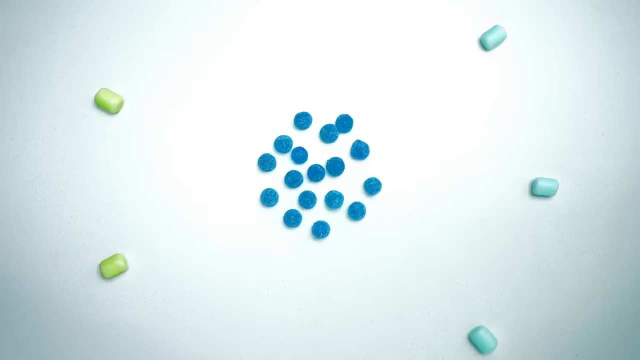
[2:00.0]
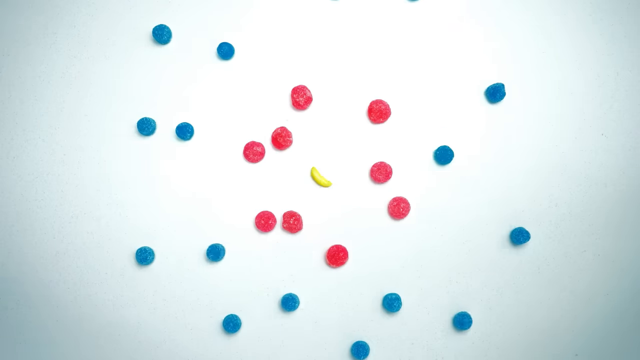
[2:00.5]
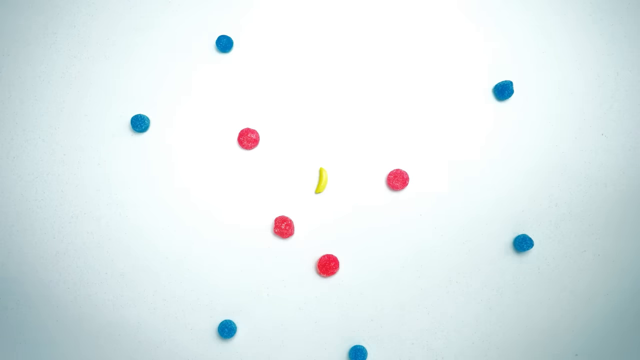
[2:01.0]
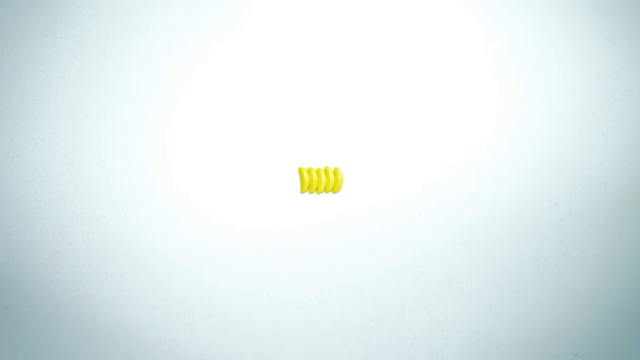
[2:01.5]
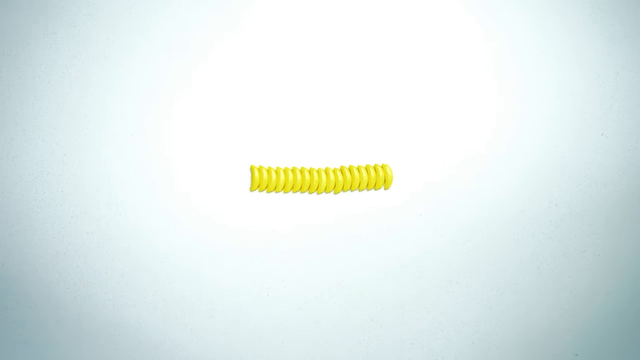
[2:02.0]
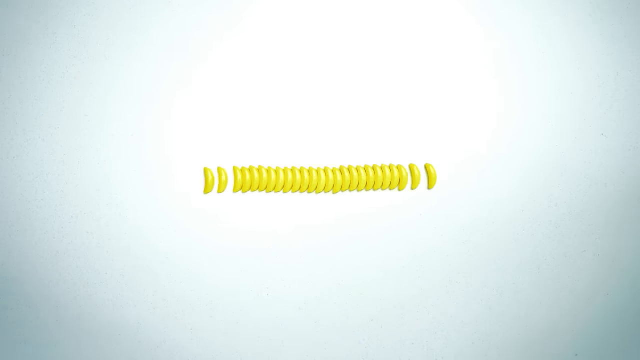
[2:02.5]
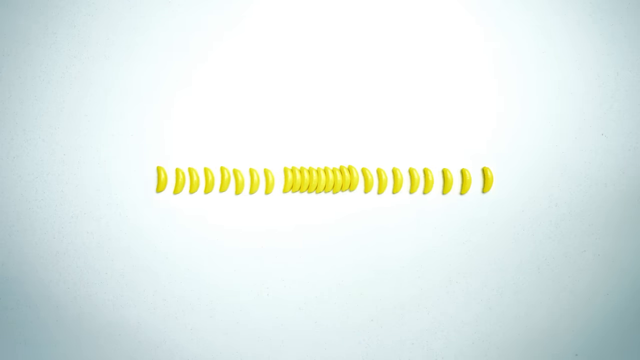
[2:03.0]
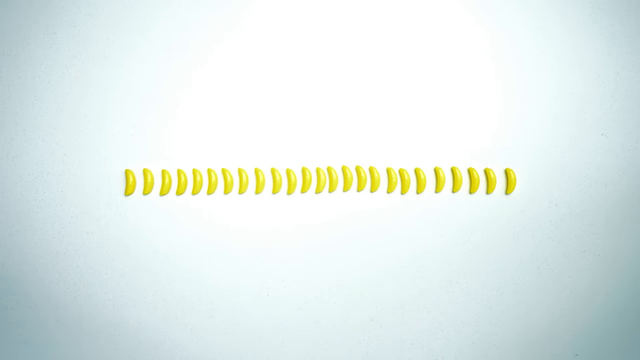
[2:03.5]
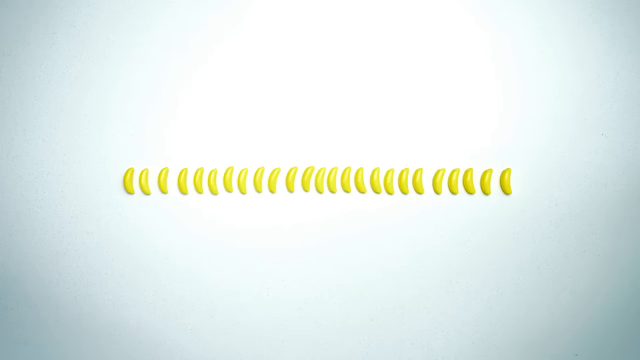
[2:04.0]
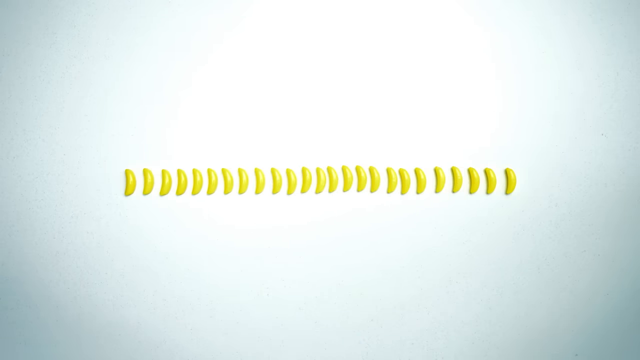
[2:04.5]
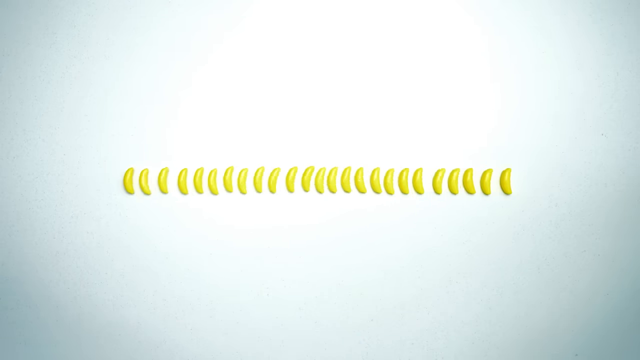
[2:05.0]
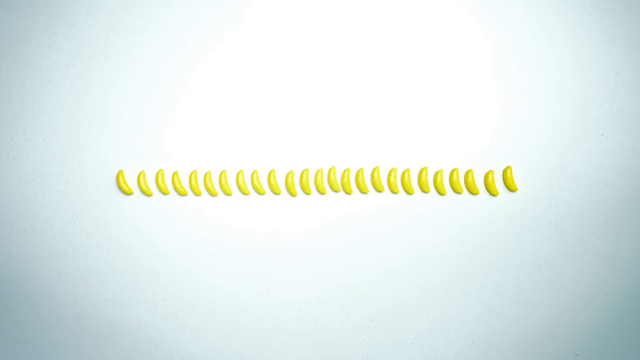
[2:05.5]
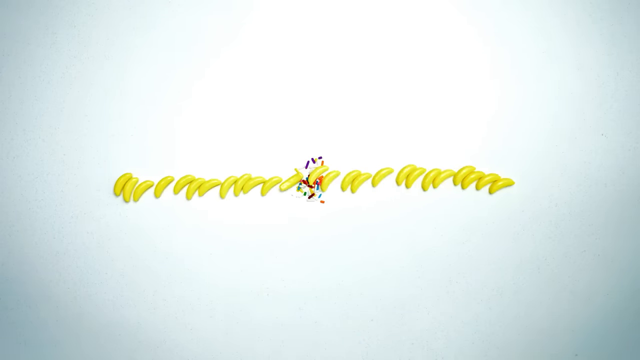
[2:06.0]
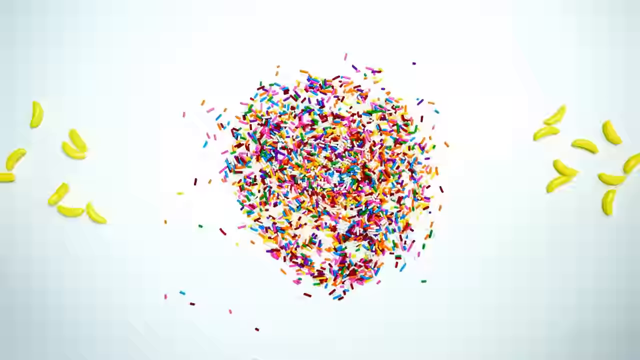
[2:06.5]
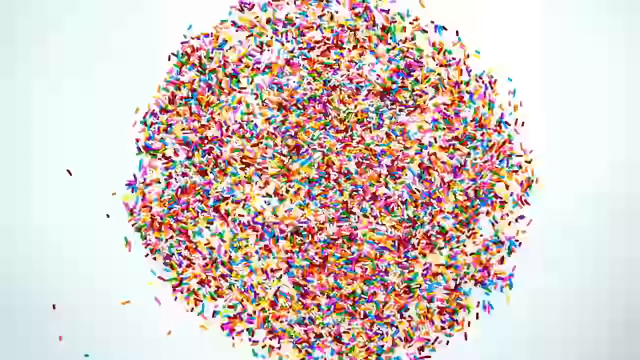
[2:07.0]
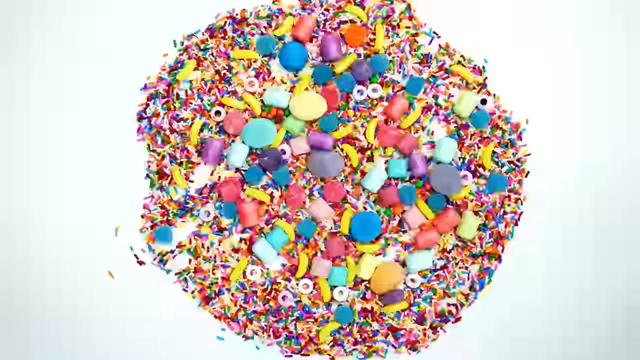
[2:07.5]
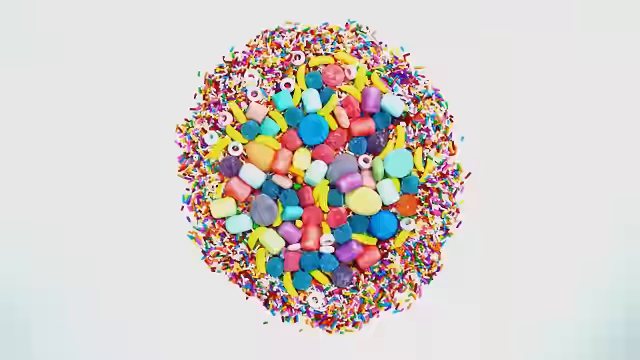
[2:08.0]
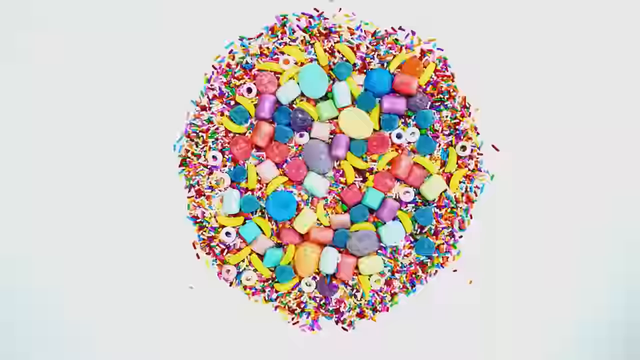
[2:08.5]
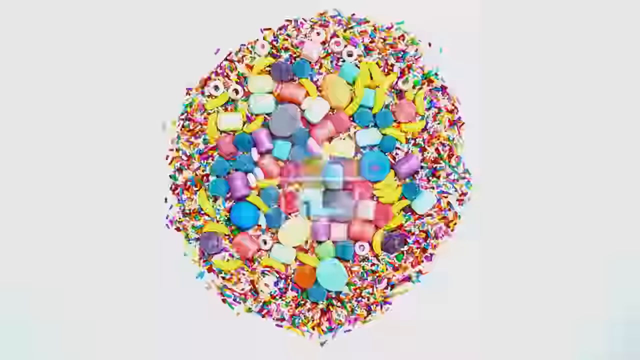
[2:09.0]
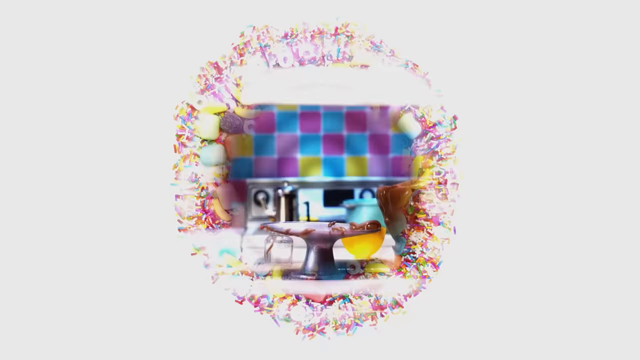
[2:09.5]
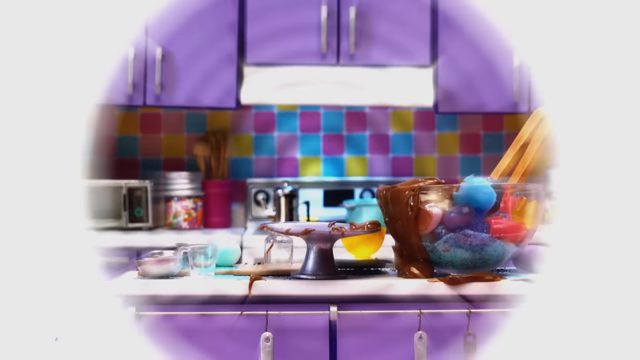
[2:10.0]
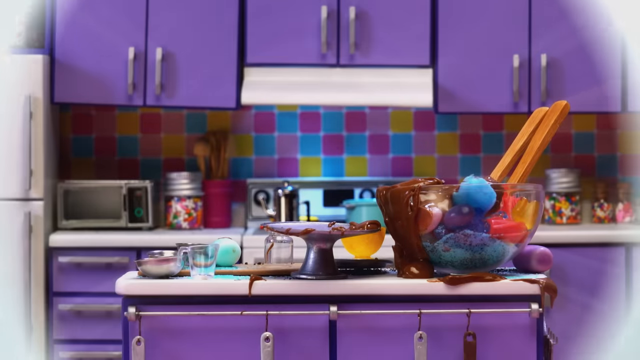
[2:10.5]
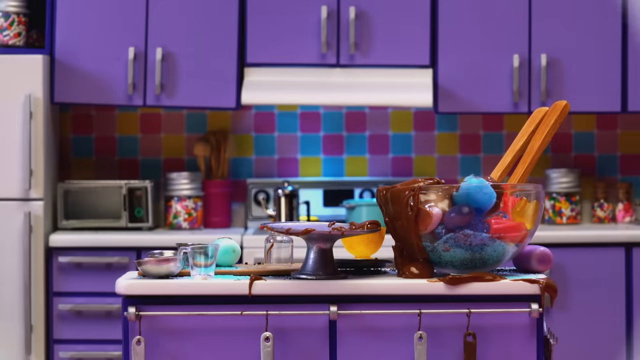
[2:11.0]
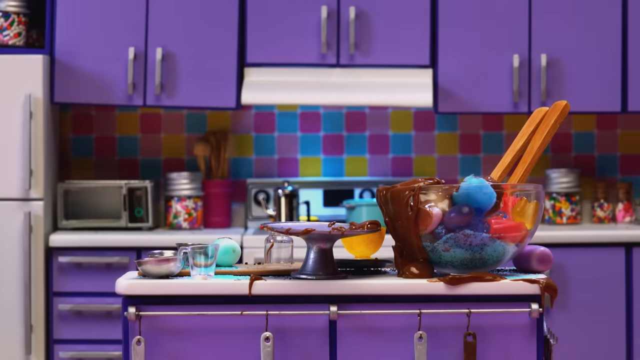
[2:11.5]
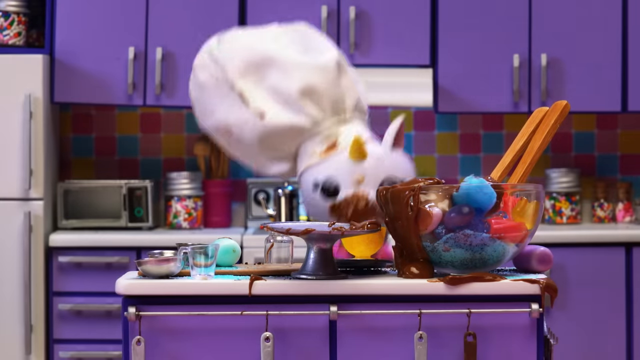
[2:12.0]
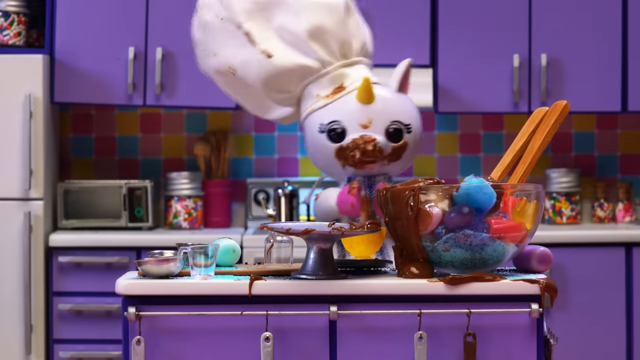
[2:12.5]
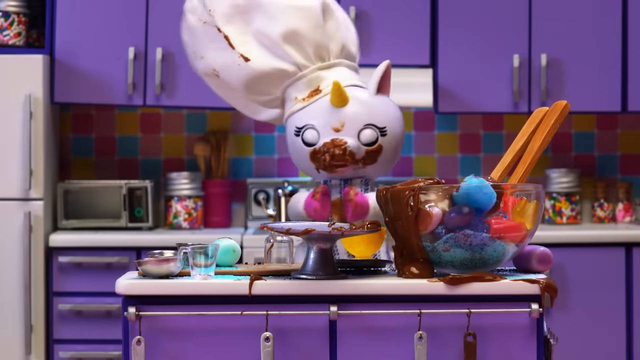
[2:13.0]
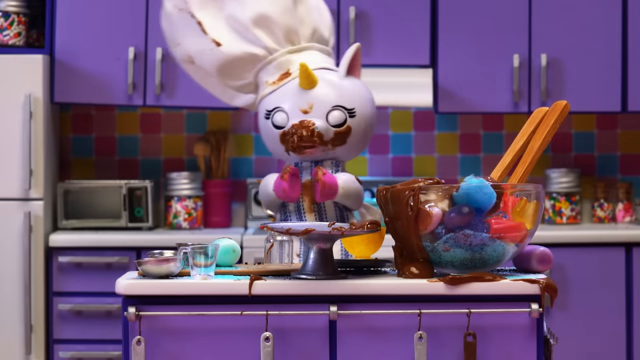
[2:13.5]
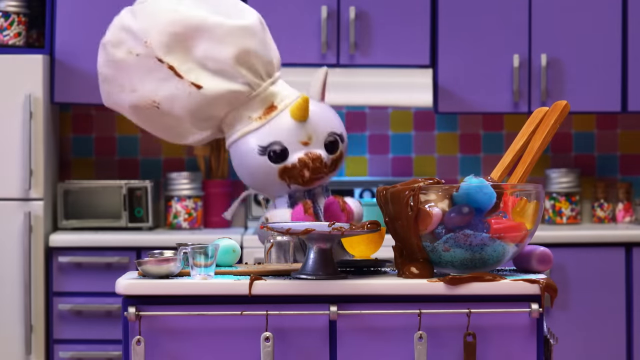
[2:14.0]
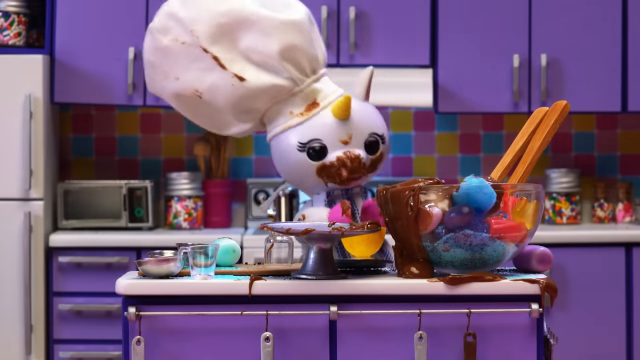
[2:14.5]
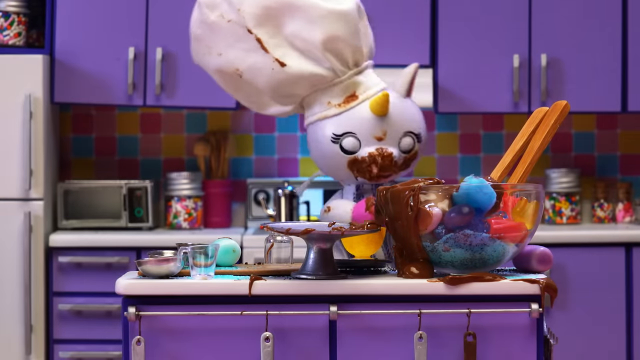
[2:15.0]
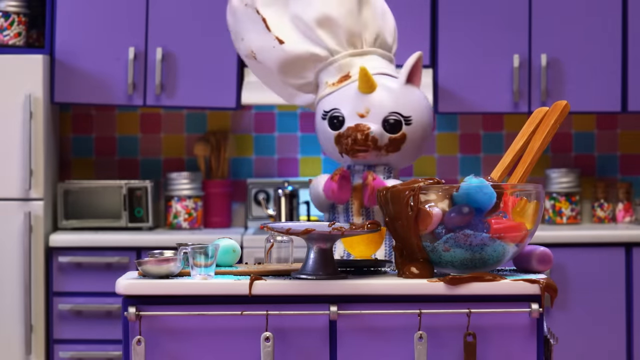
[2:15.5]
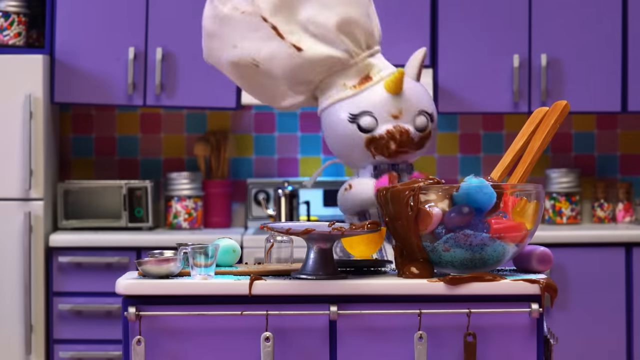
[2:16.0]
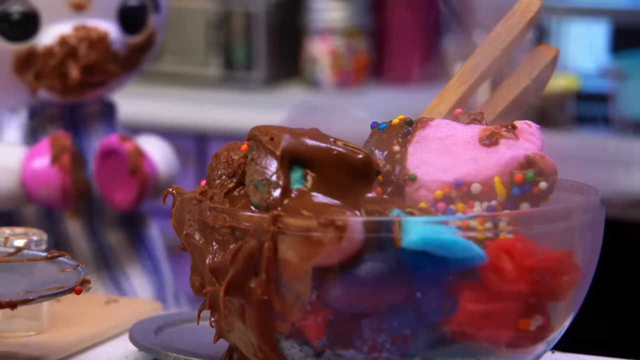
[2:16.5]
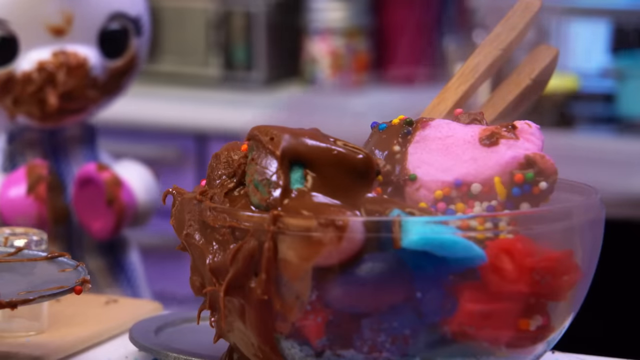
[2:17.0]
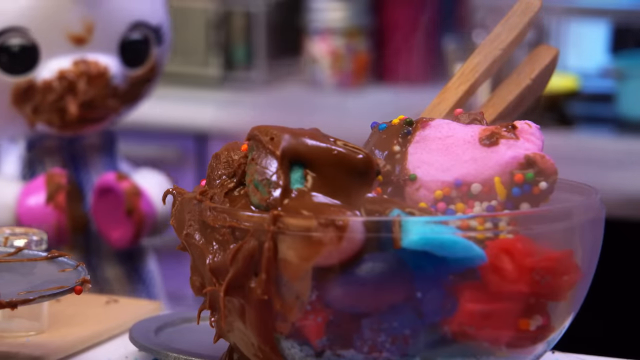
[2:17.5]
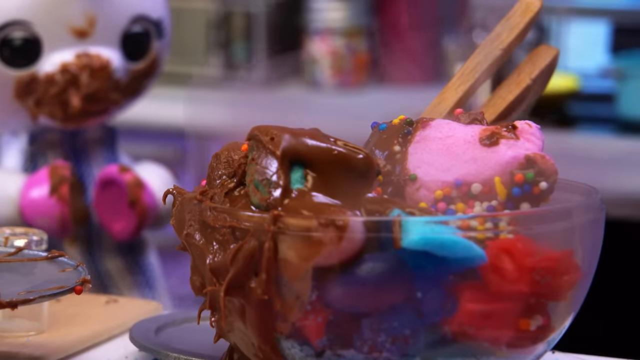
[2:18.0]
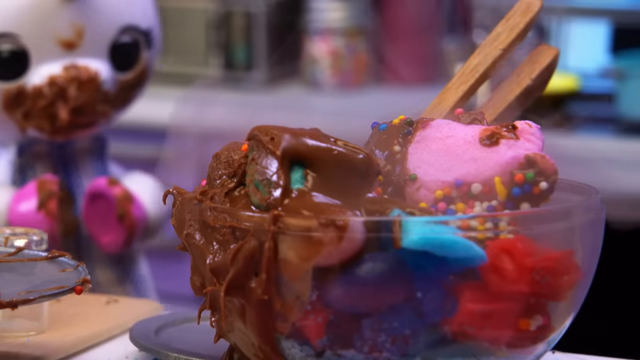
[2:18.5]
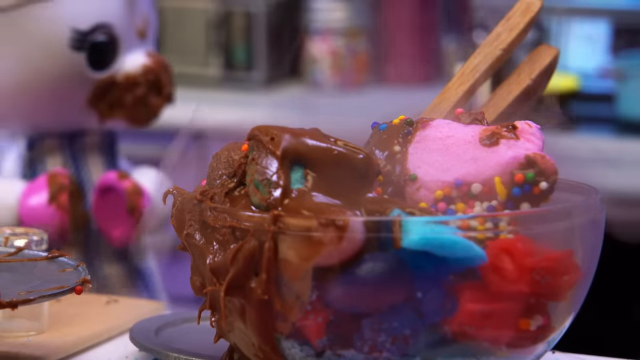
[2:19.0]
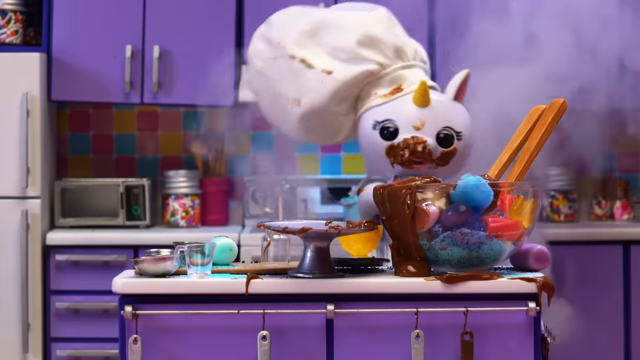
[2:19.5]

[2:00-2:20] In an animation, the candies move in toward the center and out again. Banana candies then appear, moving and doing different things. A big pile of sprinkles grows from the center, and the other candies appear on top of the sprinkles, spinning and moving. Starting from the center, the image opens up to the kitchen again, where the unicorn pops back up, still a mess, with chocolate all over her face, hooves and hat. She moves back and forth and blinks as if speaking. The camera cuts to a close-up of the mixing bowl, showing the chocolate, sprinkles, candies and cotton candy, and it looks like there might be steam coming from the bowl. The camera pans back out to a full view of the kitchen, where the steam or smoke appears to be coming from behind the counter, under or next to the unicorn, and becomes a large amount of thick smoke.